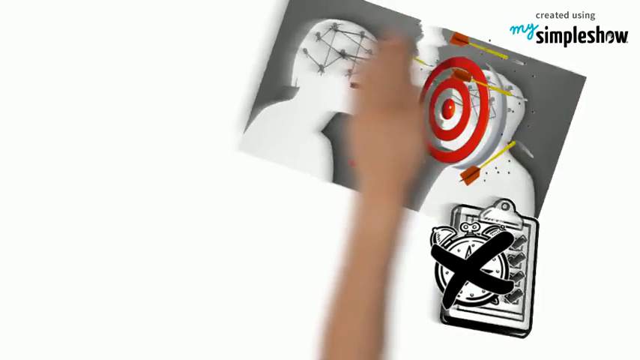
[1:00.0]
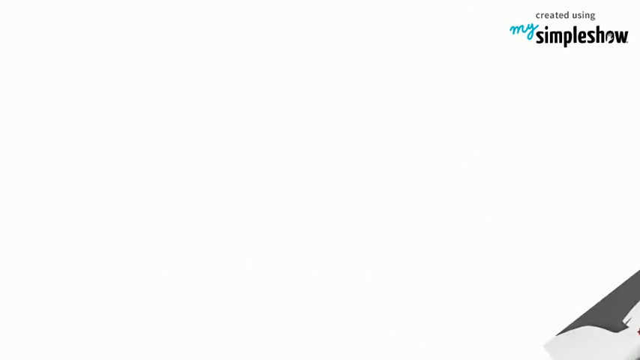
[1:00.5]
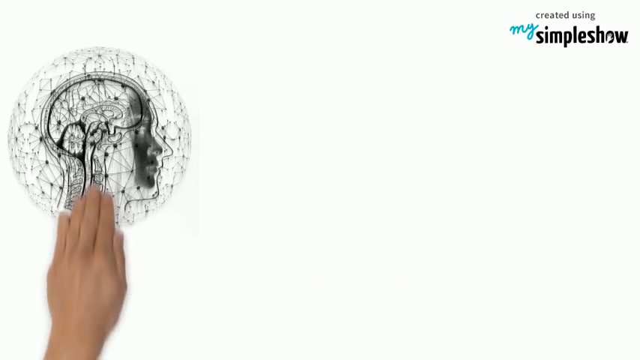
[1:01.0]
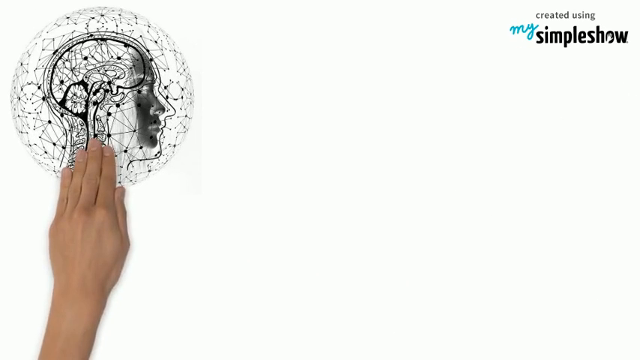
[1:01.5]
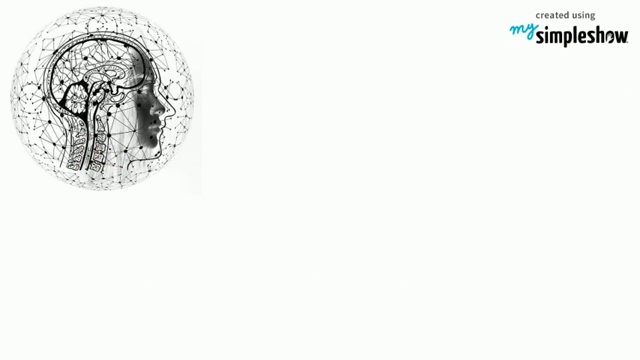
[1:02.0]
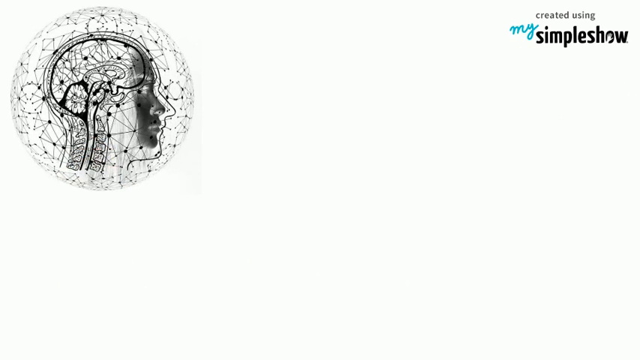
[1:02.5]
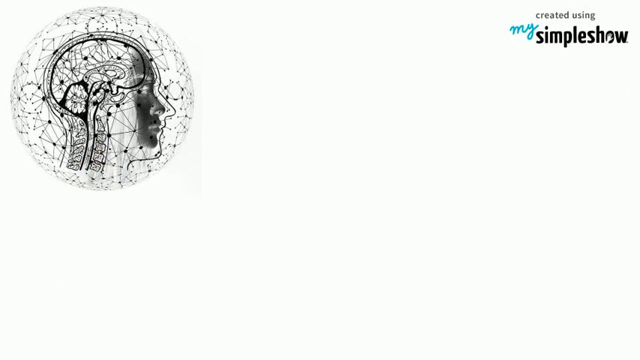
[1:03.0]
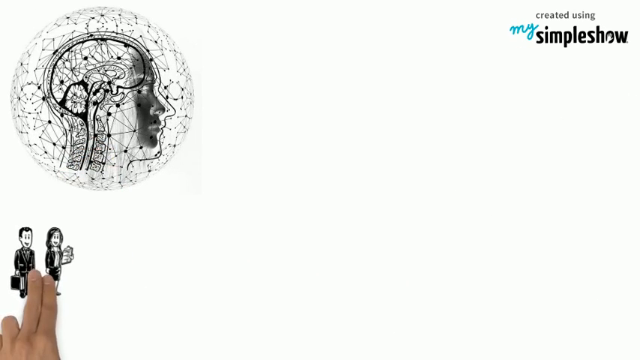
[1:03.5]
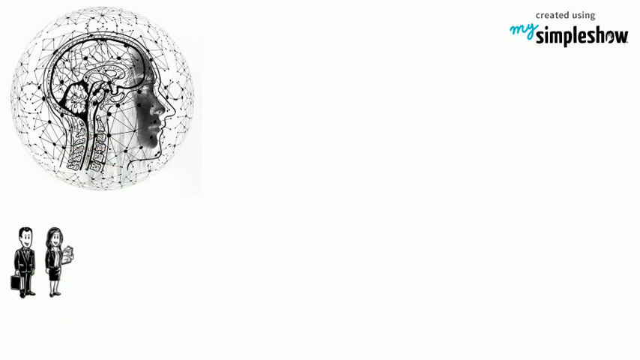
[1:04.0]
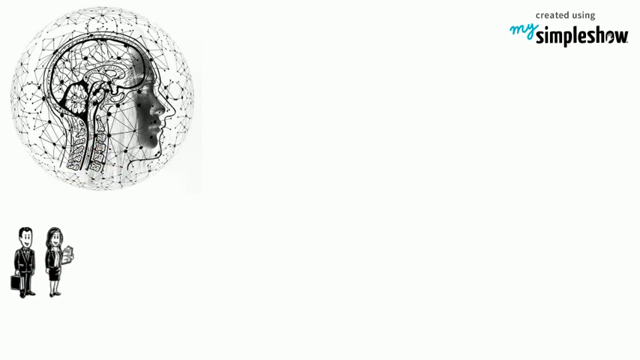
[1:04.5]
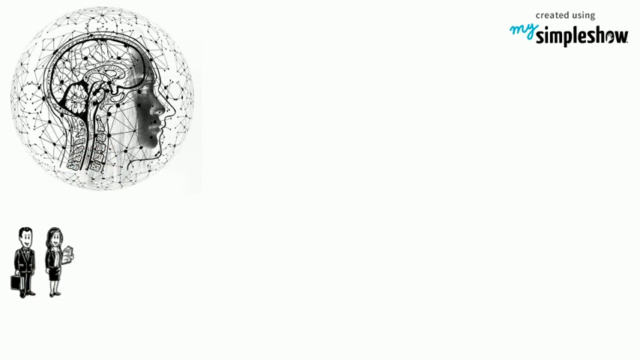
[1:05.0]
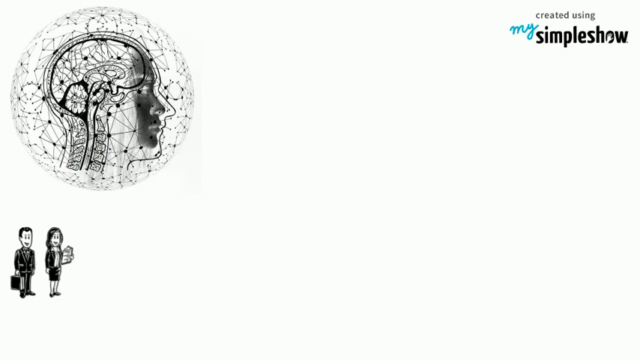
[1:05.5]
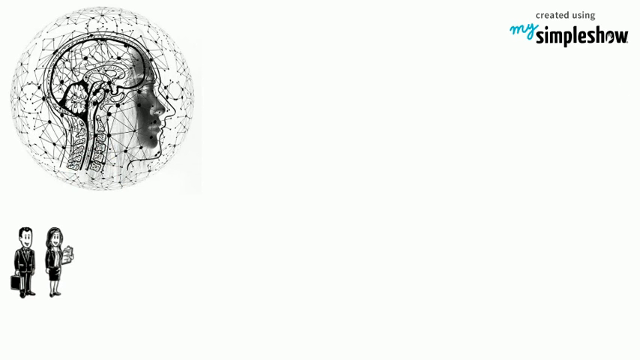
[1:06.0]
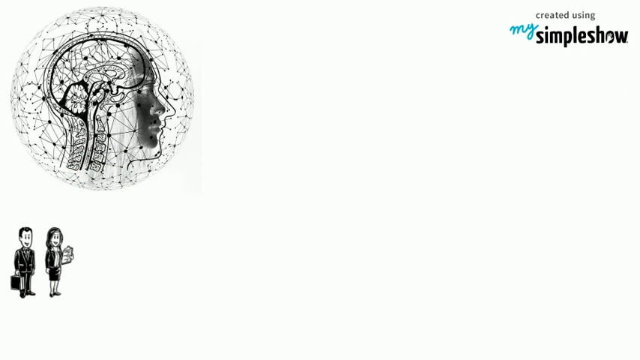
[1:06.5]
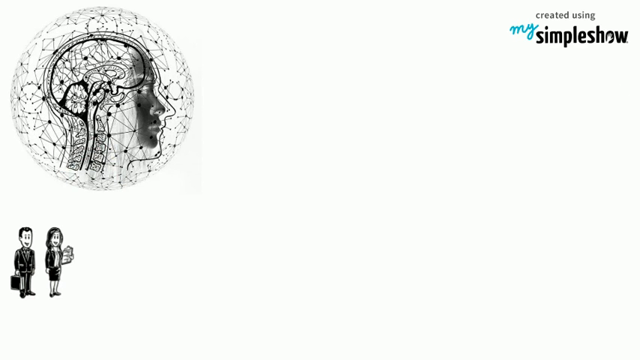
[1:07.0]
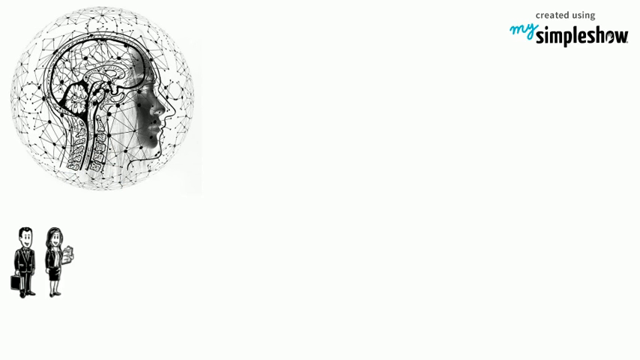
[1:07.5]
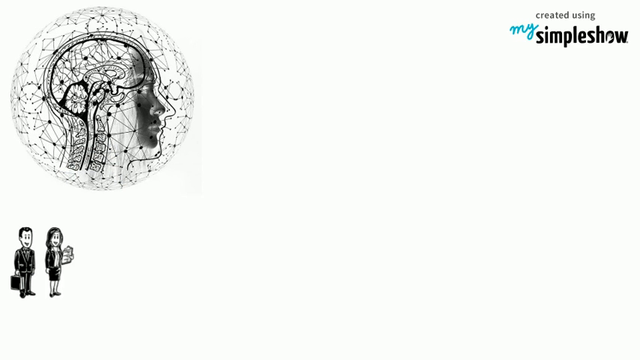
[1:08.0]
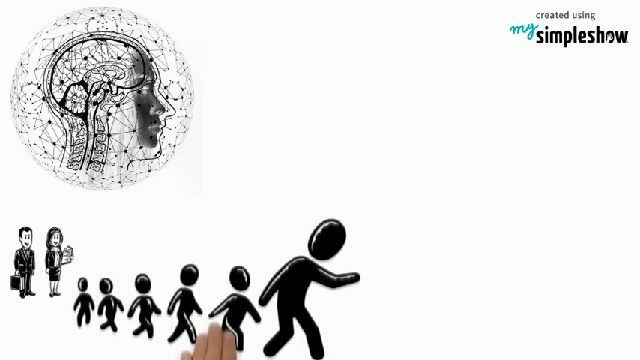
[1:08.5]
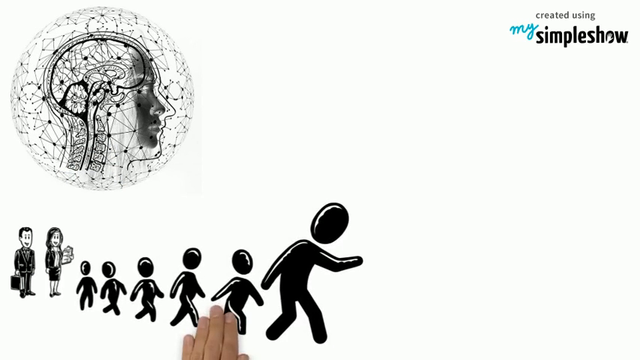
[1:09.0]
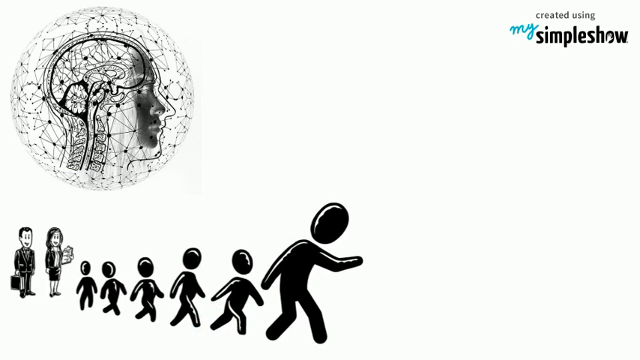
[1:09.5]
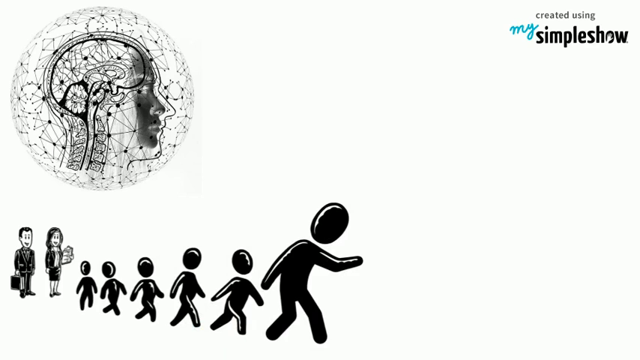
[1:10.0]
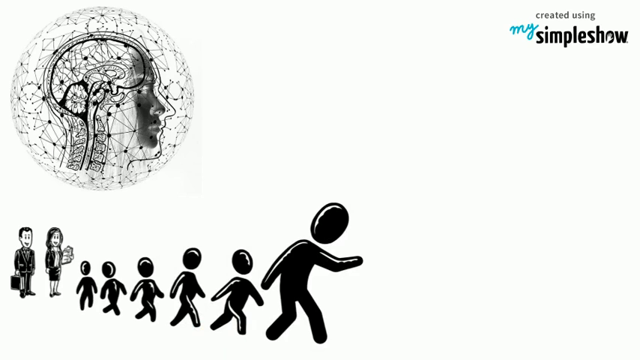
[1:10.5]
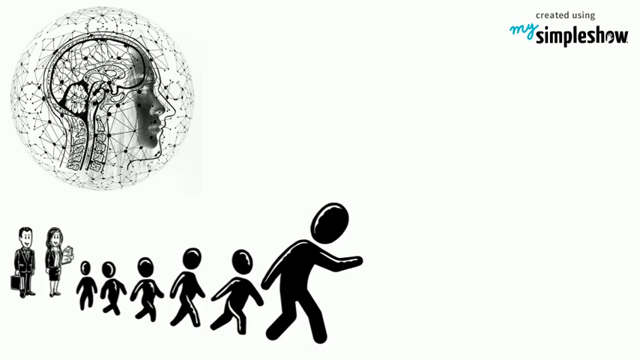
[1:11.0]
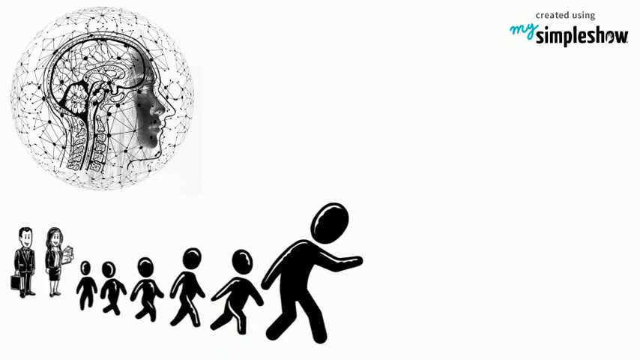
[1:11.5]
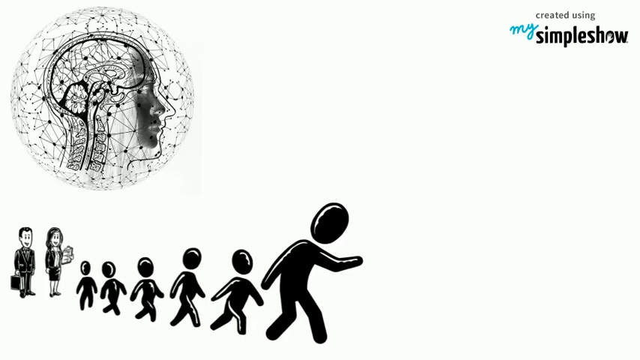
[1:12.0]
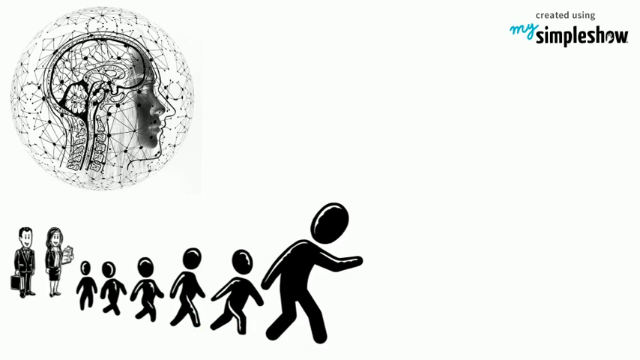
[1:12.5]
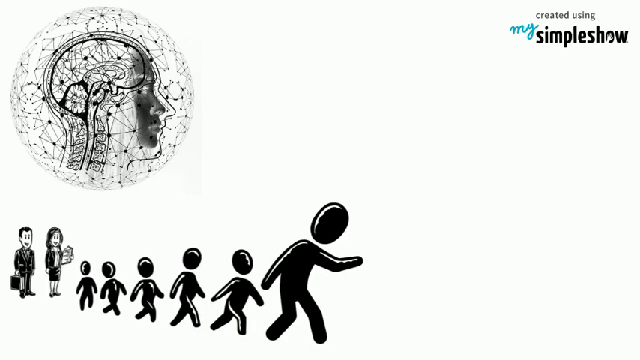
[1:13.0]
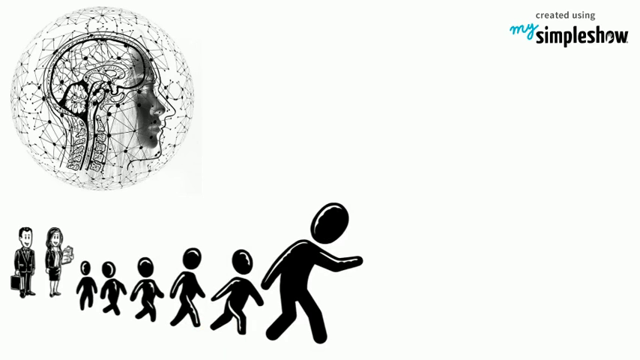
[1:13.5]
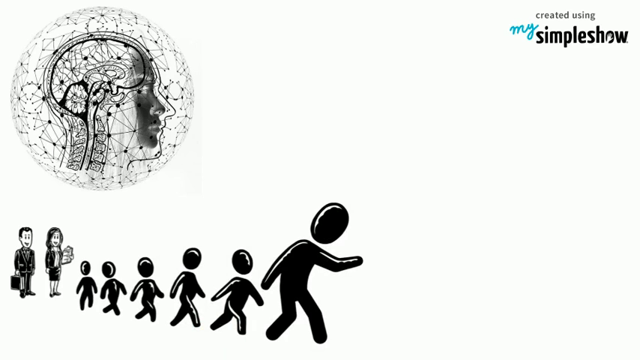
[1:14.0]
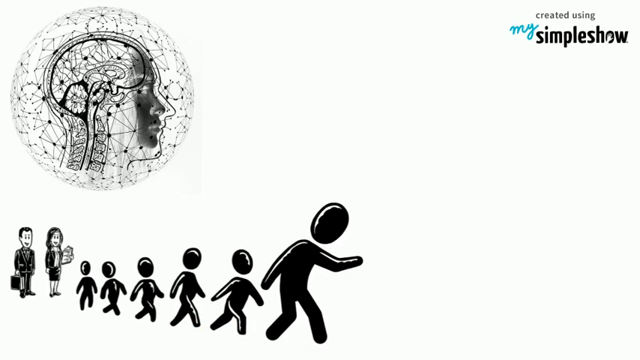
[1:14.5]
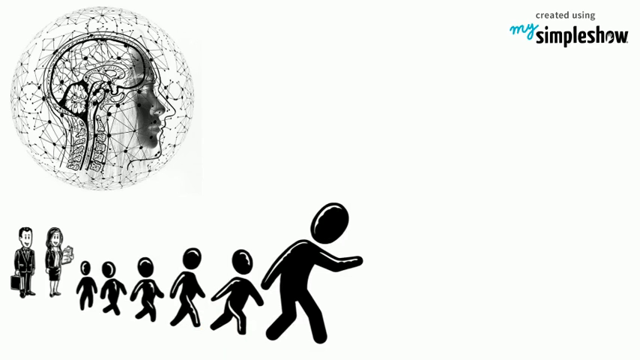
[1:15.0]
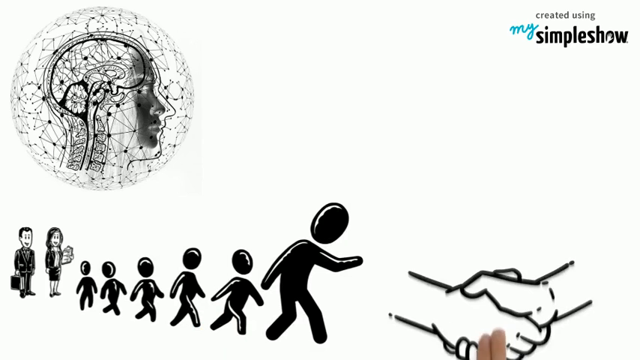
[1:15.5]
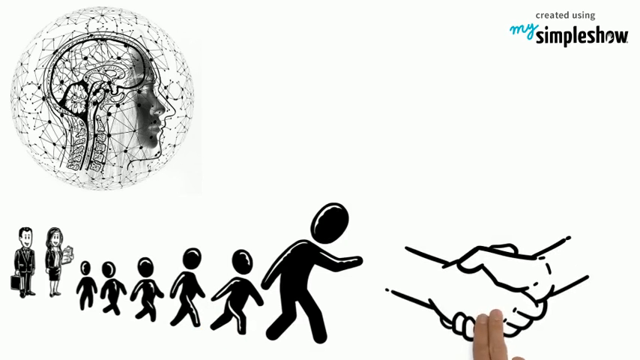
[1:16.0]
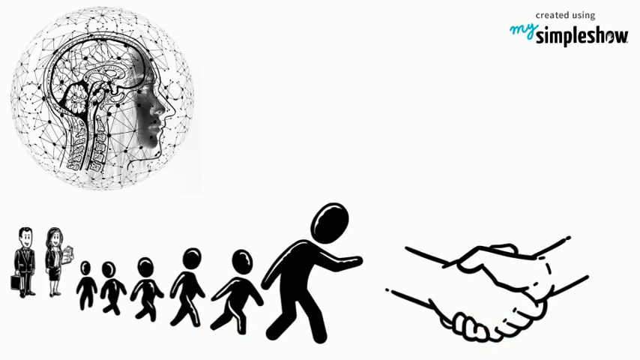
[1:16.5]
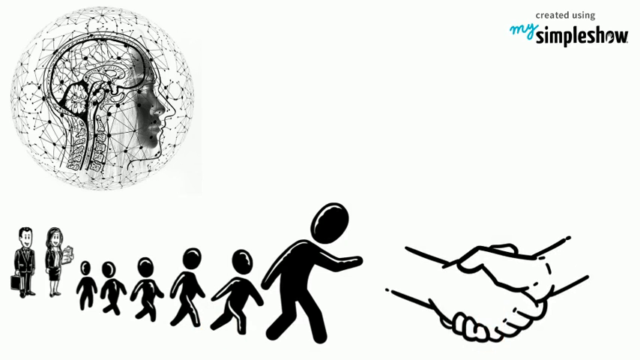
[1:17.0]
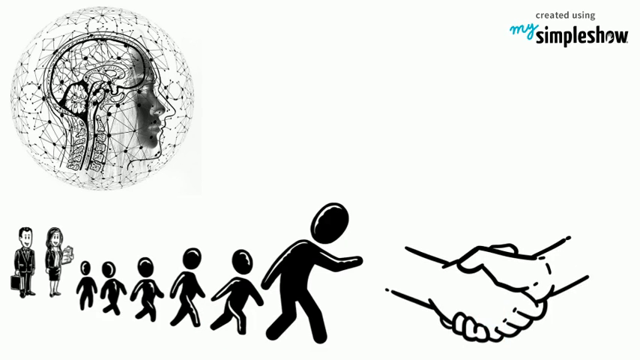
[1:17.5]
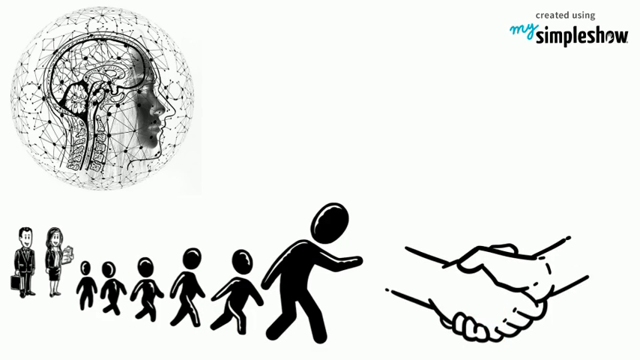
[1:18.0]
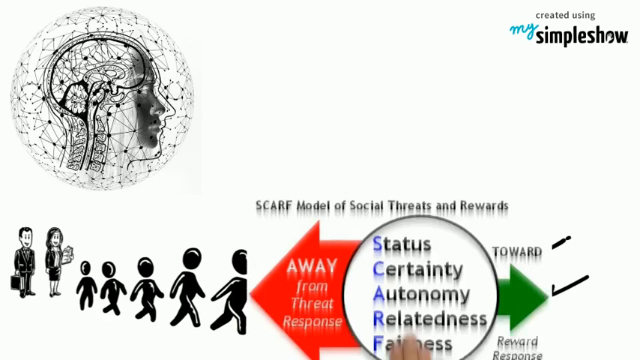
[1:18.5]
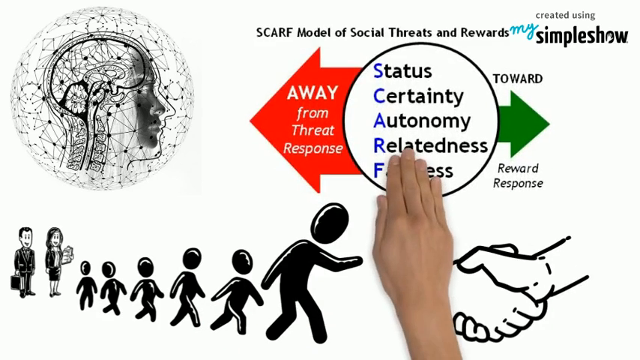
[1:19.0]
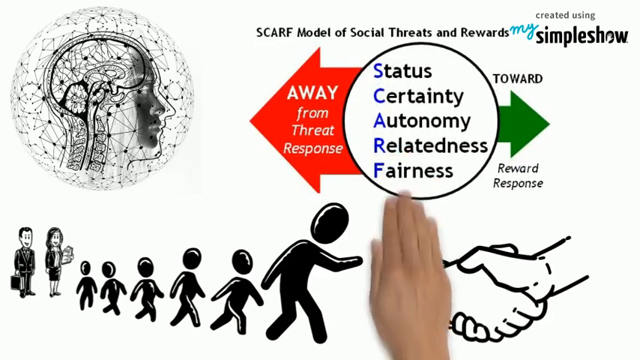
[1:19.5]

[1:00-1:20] The video, created using My Simple Show, shows a person's finger displaying something that looks like an image of a woman's head with a brain, caught up in a circular web. Next, a man and a woman appear in corporate attire, most likely suits; both are holding a bag, and the woman seems to be holding books. Then a line of figures moves in a straight line toward a direction. Two hands shake each other, and a figure shows the words status, certainty, autonomy, relatedness and fairness.